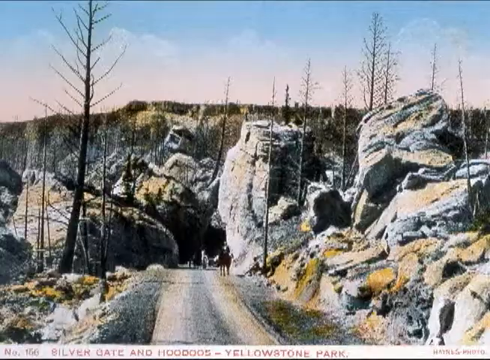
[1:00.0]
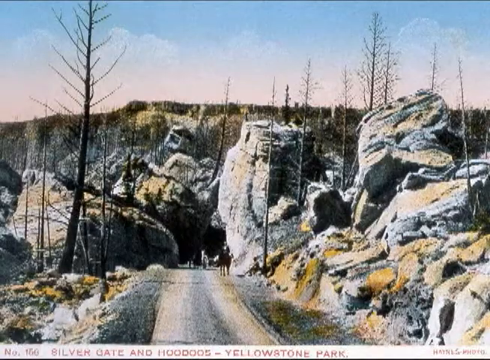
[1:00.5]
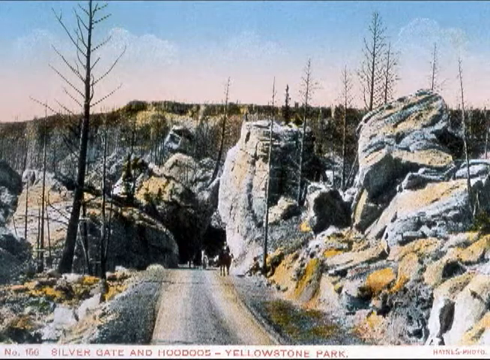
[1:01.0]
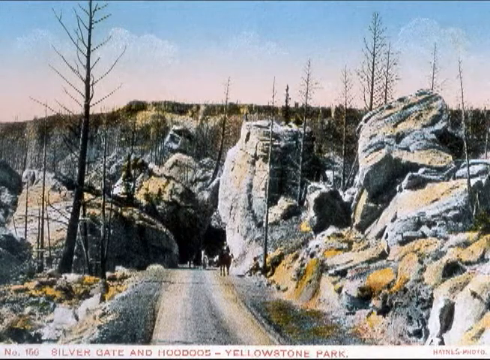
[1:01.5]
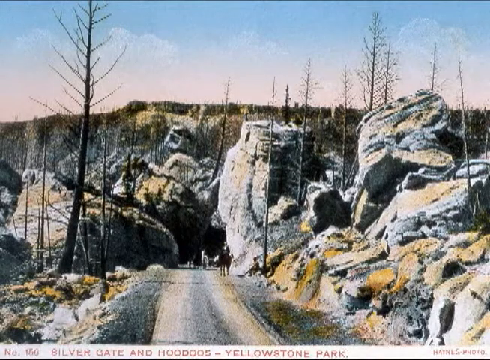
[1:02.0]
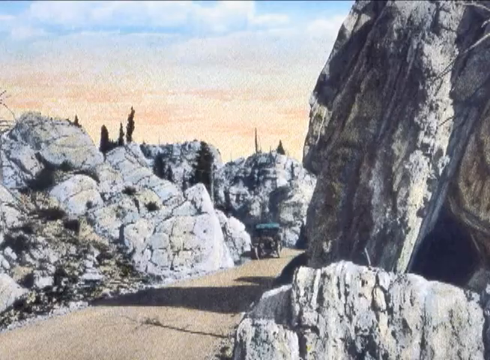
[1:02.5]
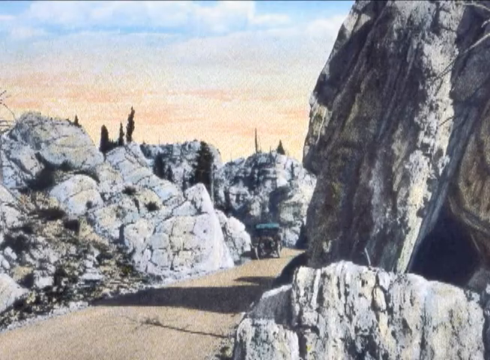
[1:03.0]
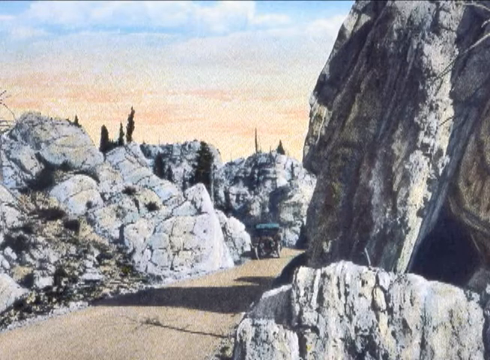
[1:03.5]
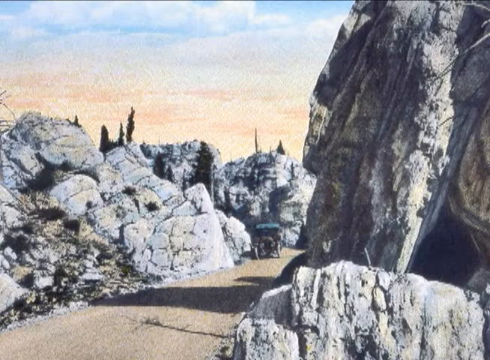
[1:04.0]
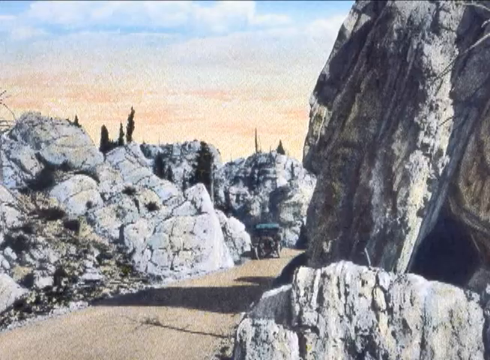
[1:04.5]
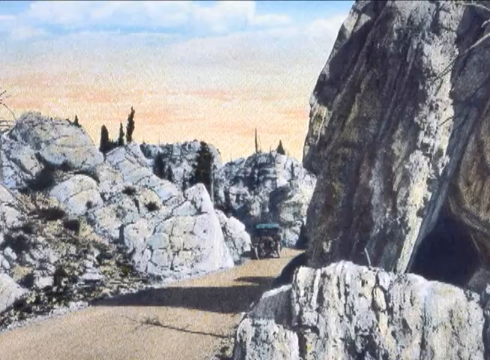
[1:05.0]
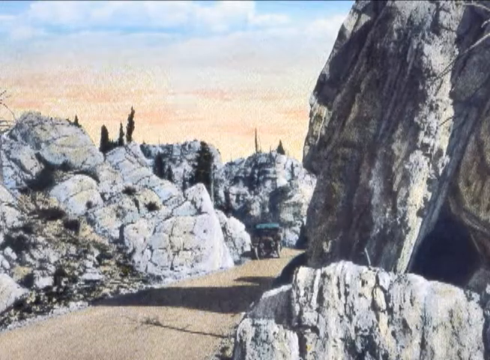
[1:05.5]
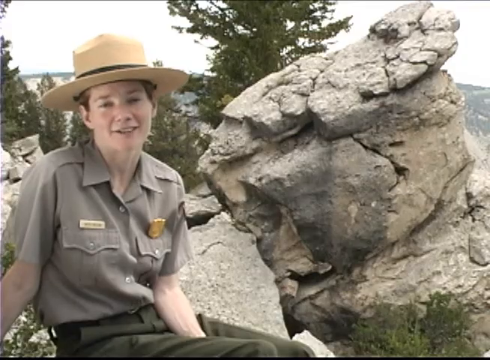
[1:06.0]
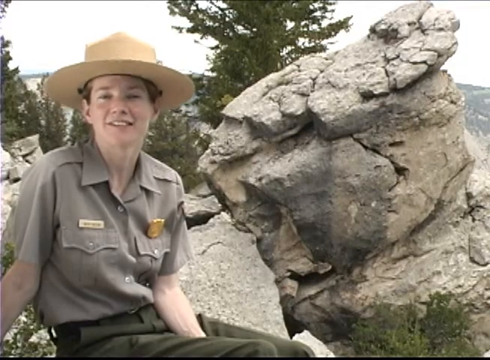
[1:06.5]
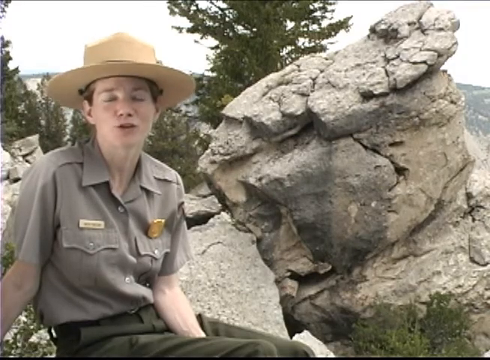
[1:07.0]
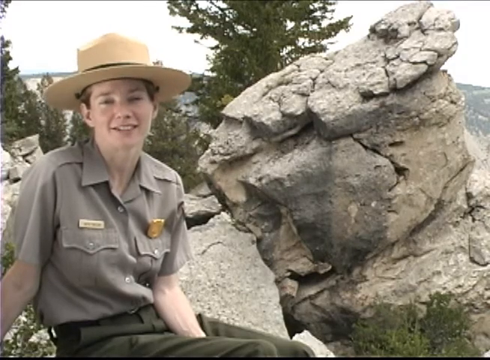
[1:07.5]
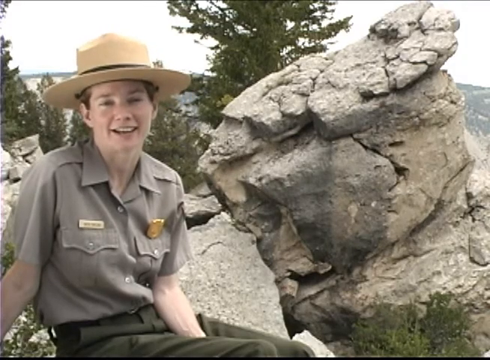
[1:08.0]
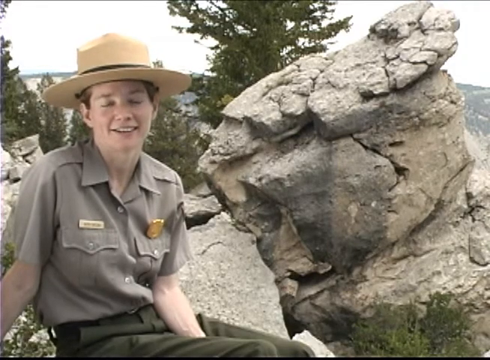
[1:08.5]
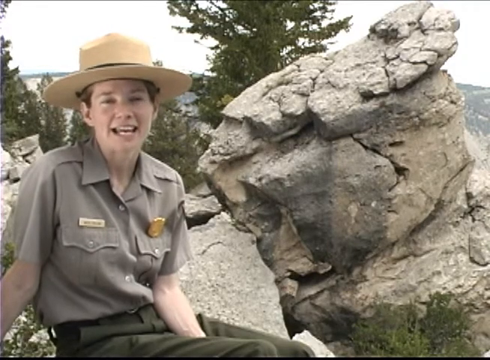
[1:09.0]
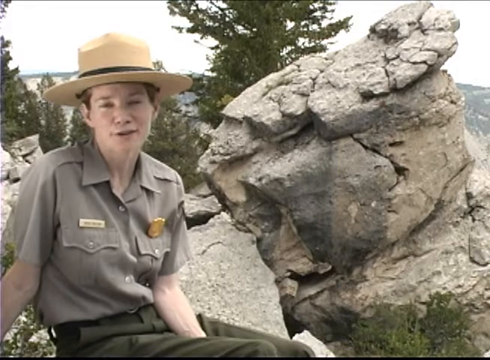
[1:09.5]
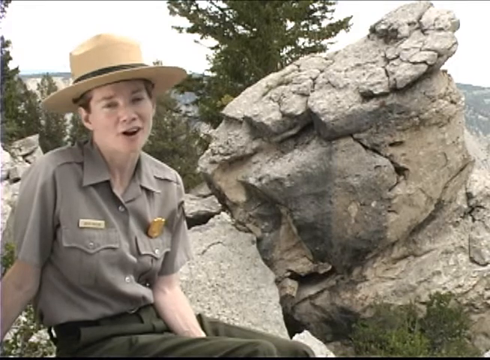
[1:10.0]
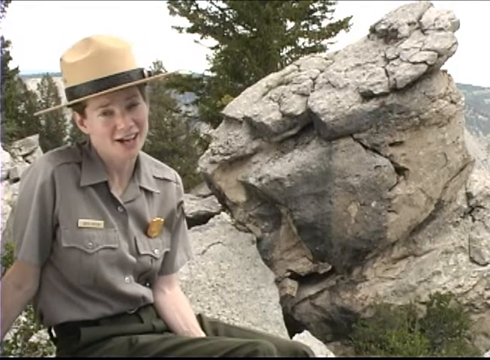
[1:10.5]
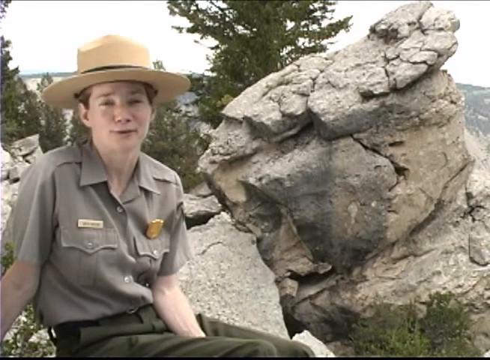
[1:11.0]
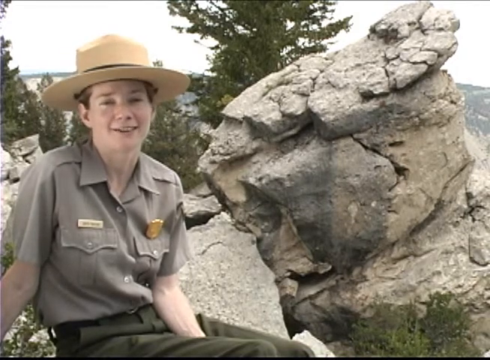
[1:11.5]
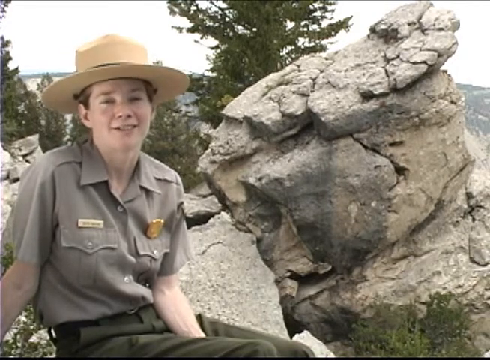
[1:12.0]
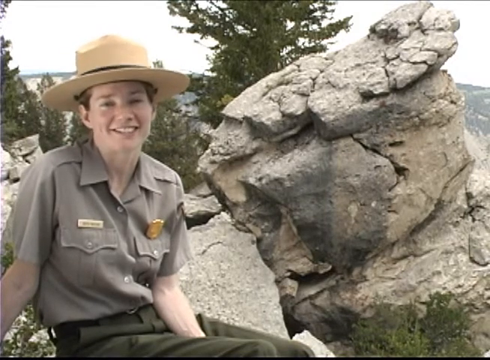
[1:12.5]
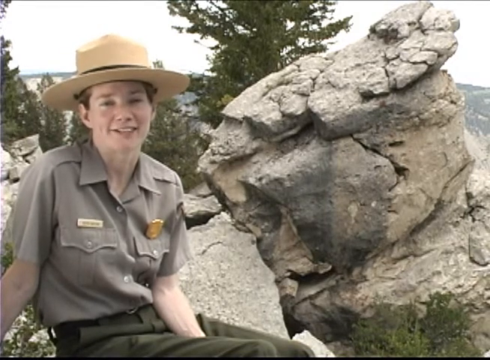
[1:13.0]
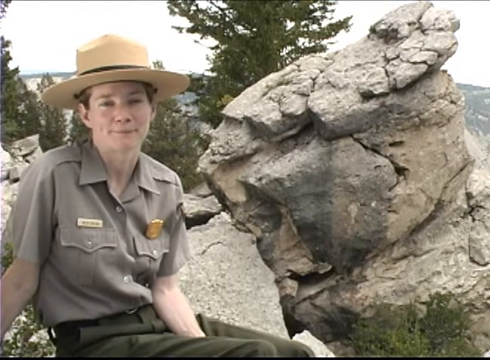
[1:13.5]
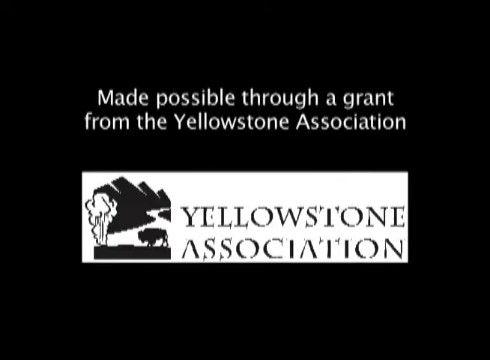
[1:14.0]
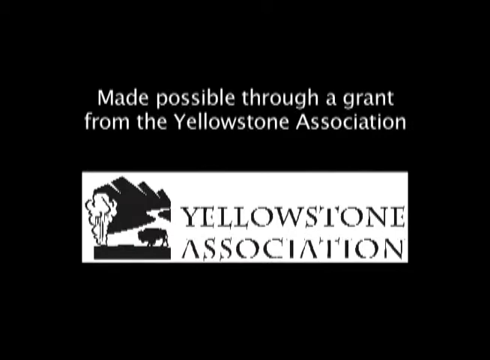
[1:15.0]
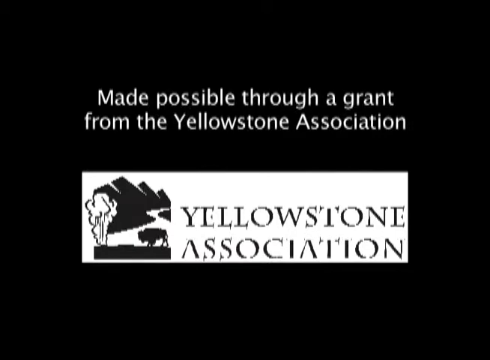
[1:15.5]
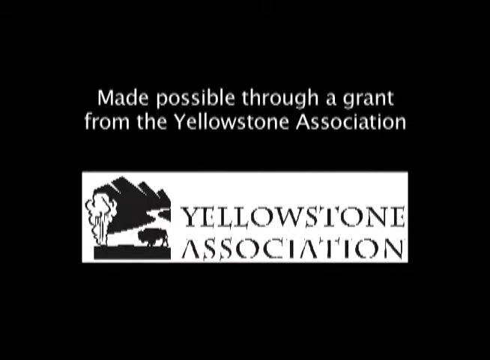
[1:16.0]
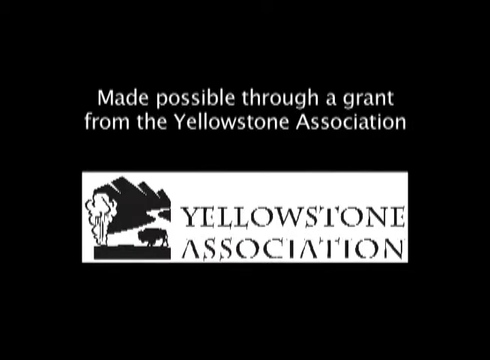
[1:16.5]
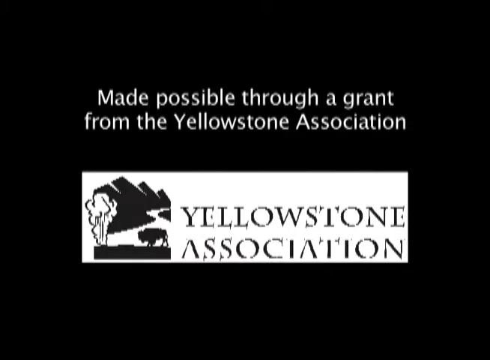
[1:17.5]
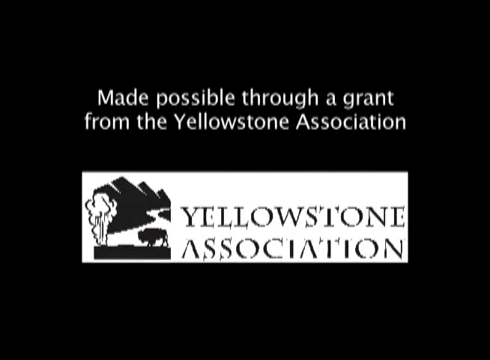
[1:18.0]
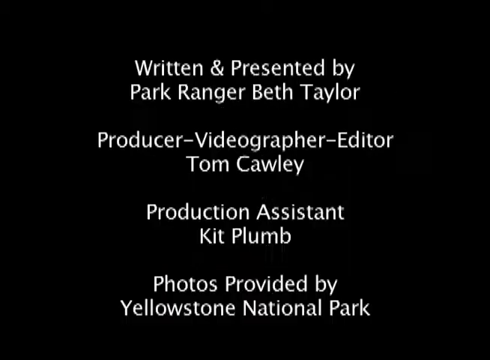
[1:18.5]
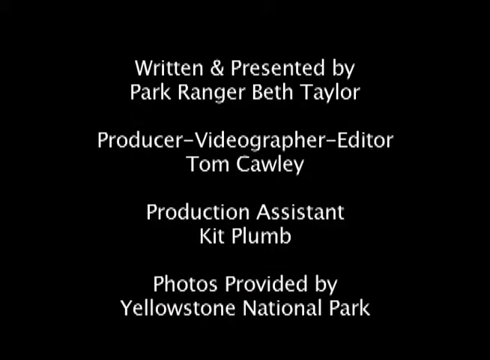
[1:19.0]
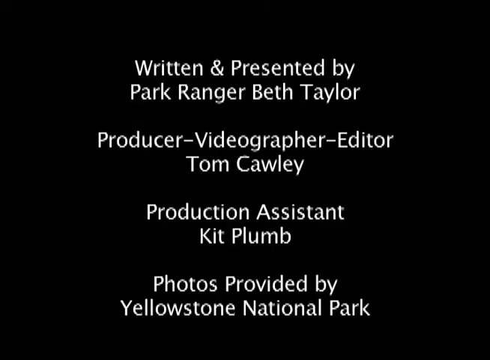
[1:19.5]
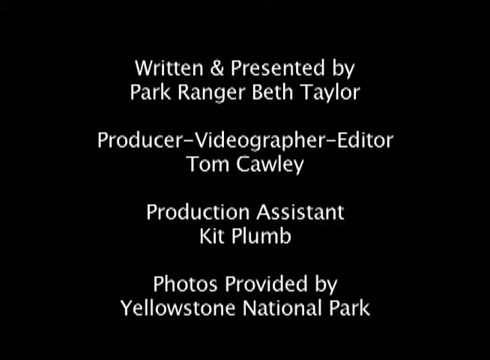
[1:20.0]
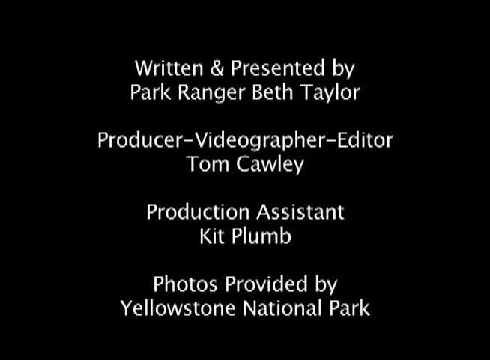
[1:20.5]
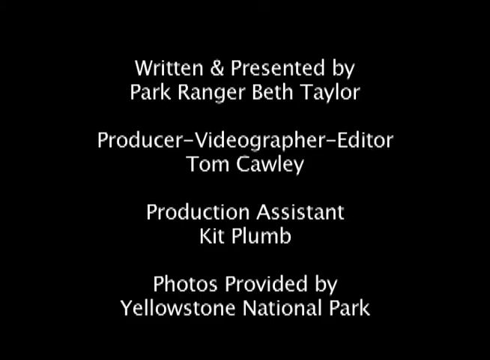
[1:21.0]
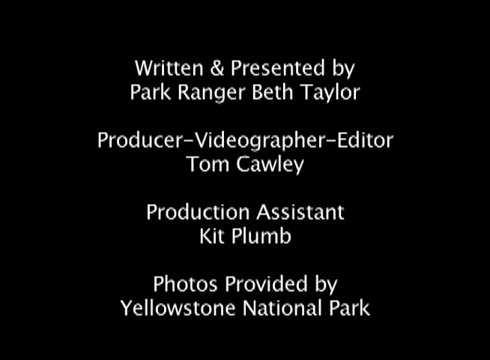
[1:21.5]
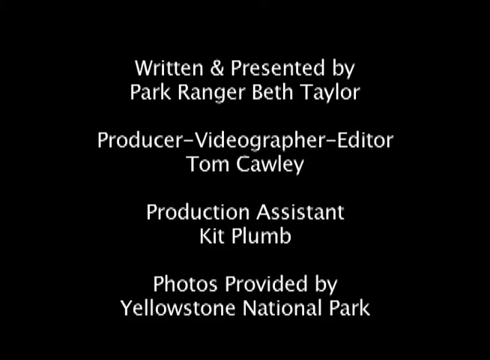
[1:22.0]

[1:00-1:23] The same boy is talking. Written credits then appear, naming a producer, Tom, a production assistant, Keith, and something "provided by Yellowstone National Park". The place is in Yellowstone National Park.